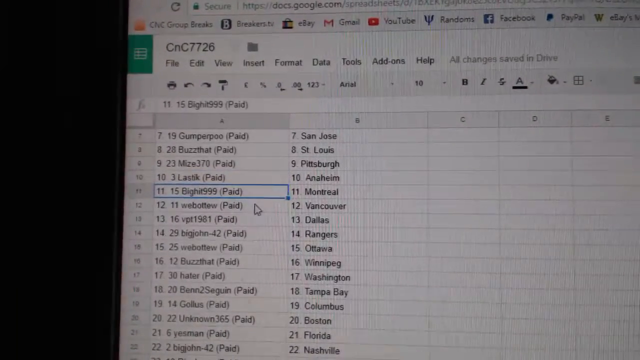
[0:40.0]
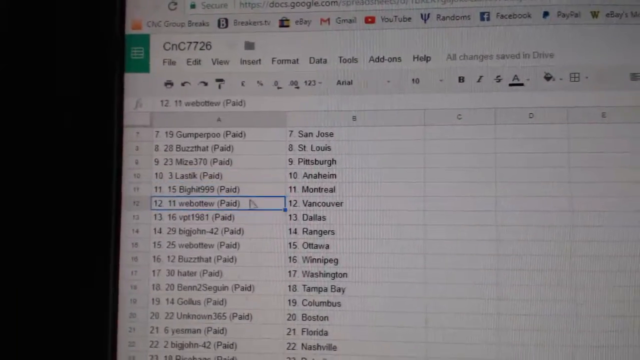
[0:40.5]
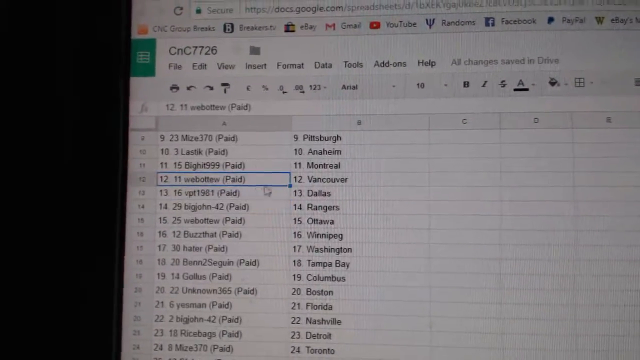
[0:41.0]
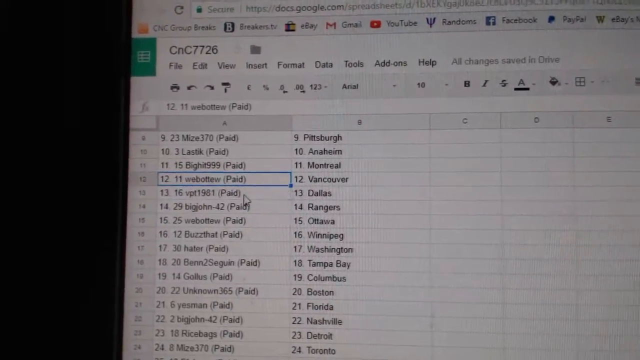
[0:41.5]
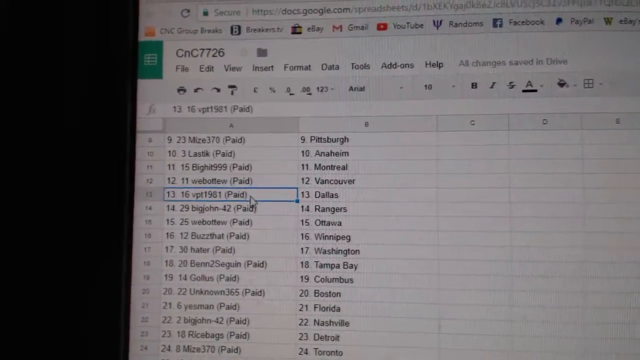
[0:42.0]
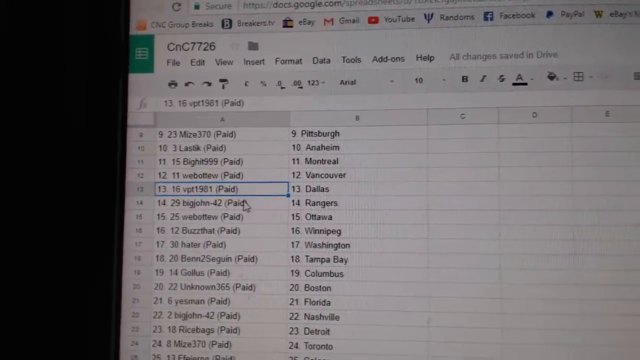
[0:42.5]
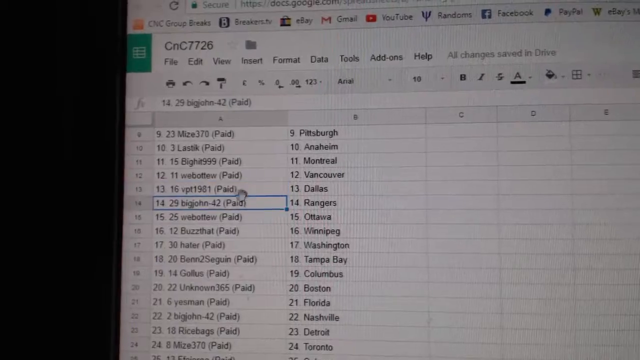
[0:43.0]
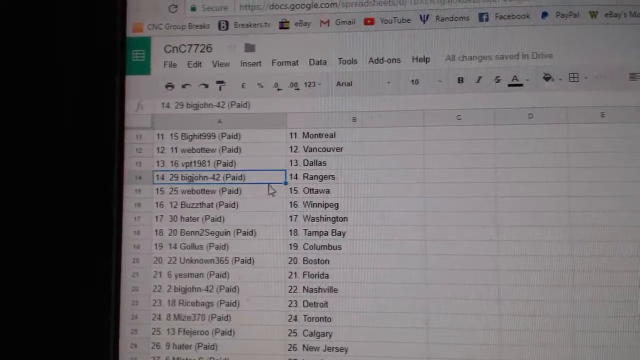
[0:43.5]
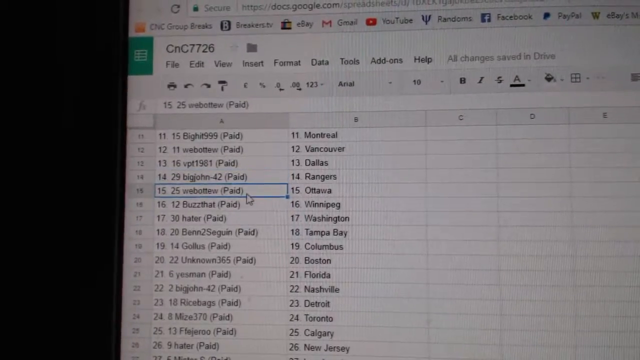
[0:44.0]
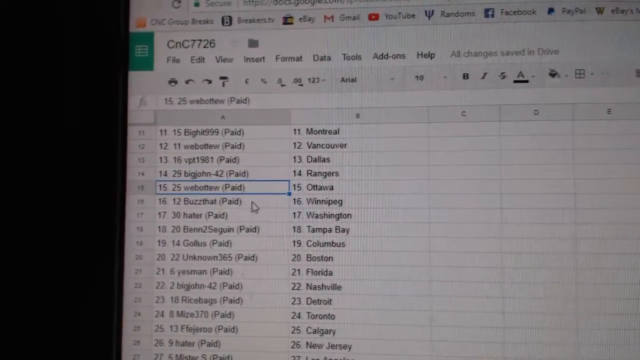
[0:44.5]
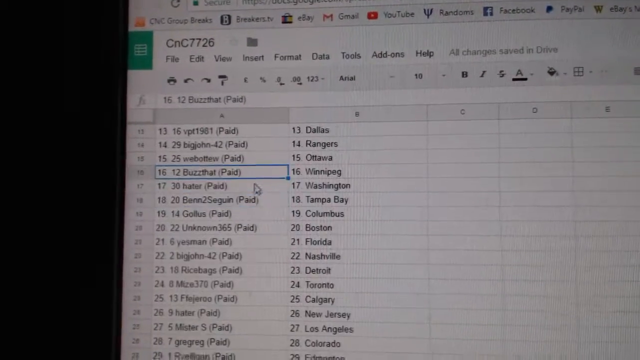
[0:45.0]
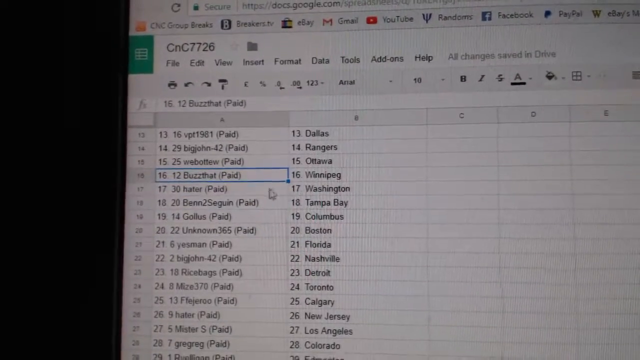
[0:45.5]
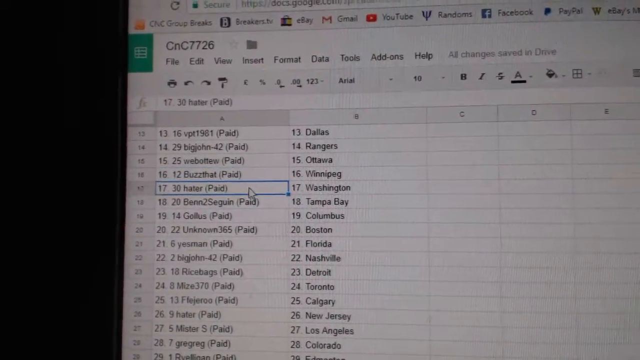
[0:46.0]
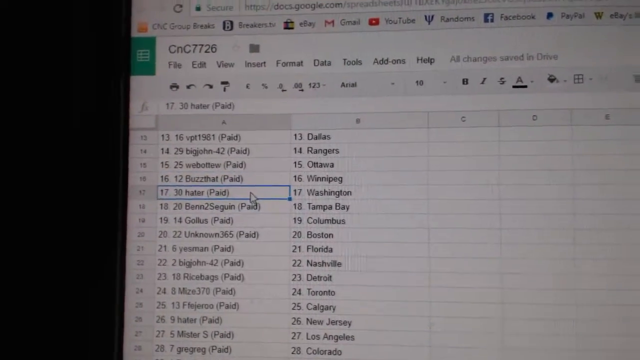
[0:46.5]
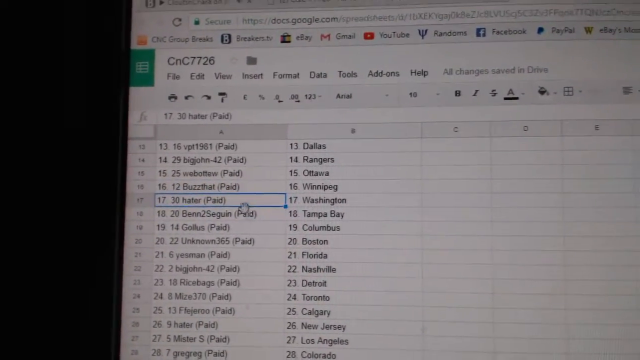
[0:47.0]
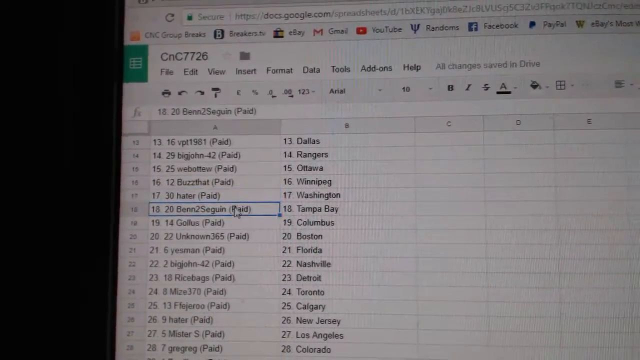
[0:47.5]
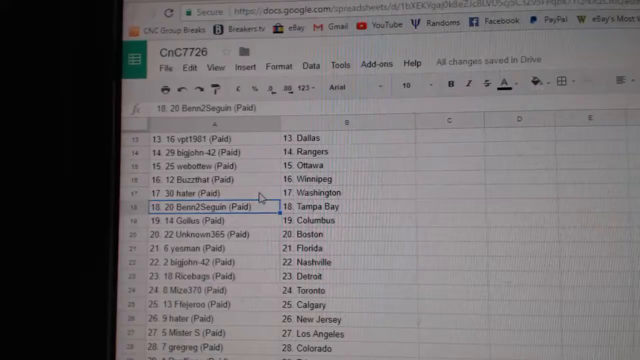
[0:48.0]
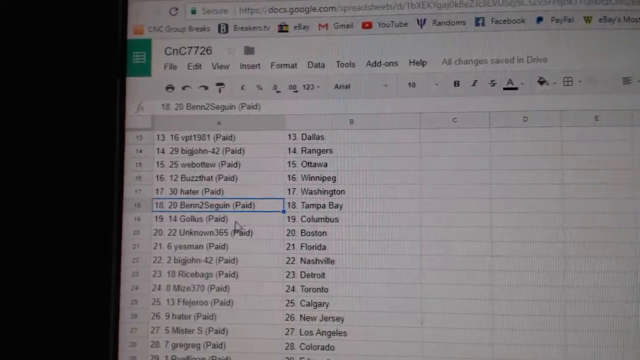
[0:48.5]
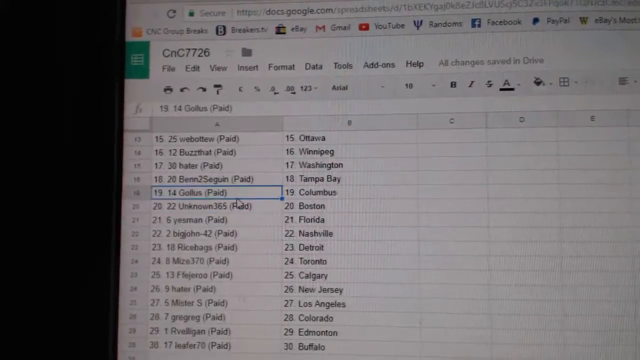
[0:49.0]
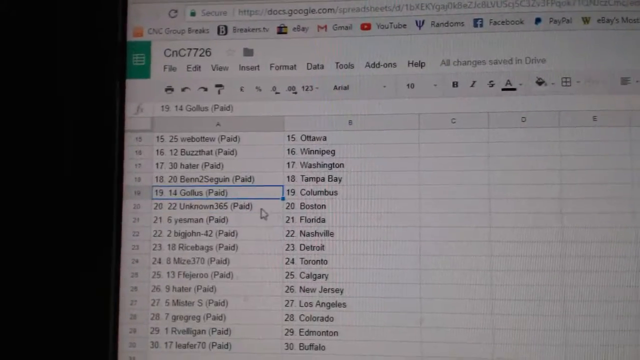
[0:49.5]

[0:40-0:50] A spreadsheet application is recorded from another camera rather than directly on the computer, with the file title showing as CnC7726. Two columns are filled in: column A has a number of usernames or similar entries, each followed by the word paid in brackets, and column B primarily lists a number of cities. The user clicks rows in column A one at a time, sometimes moving the cursor over to the city beside it in column B.